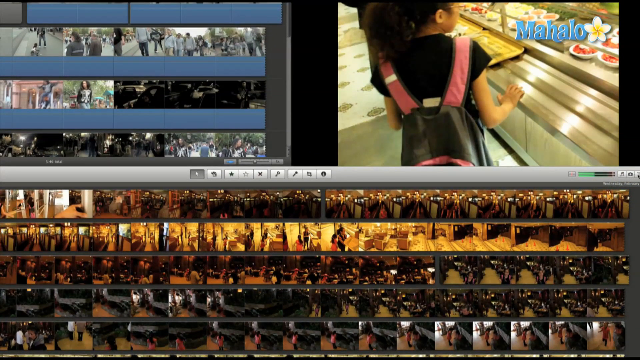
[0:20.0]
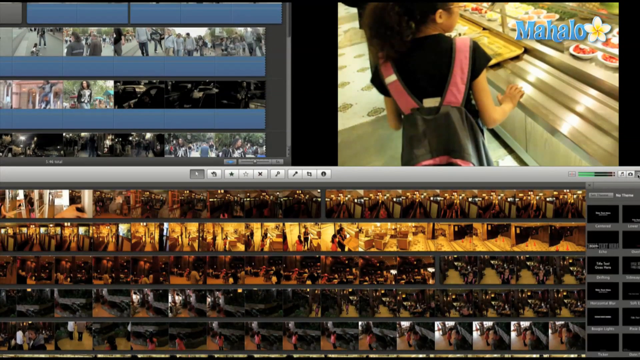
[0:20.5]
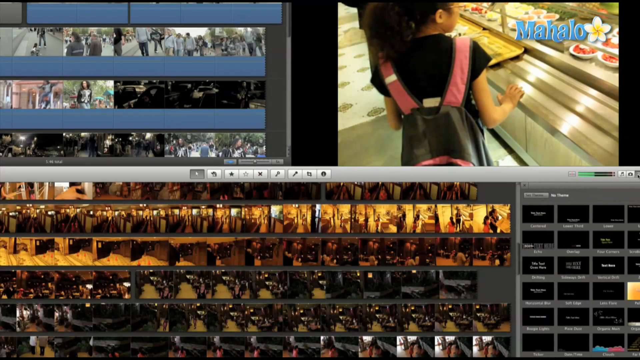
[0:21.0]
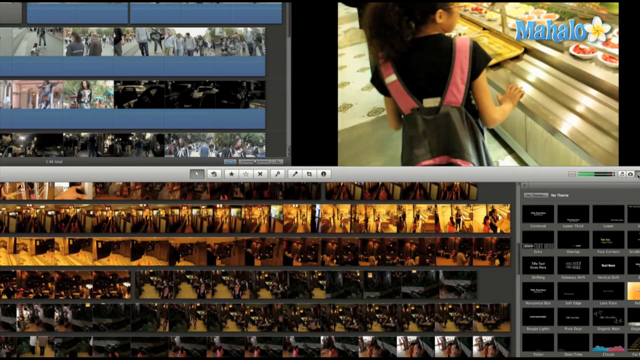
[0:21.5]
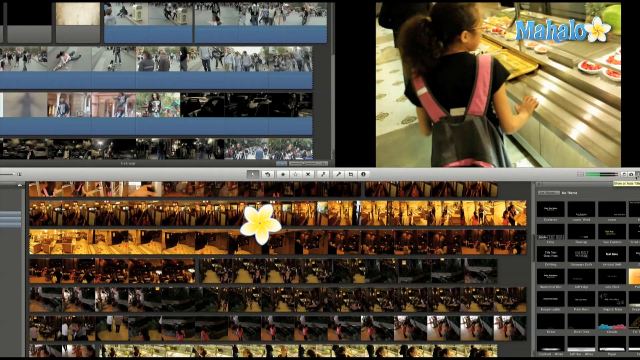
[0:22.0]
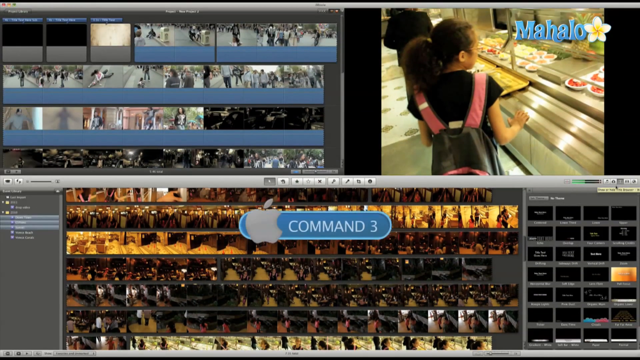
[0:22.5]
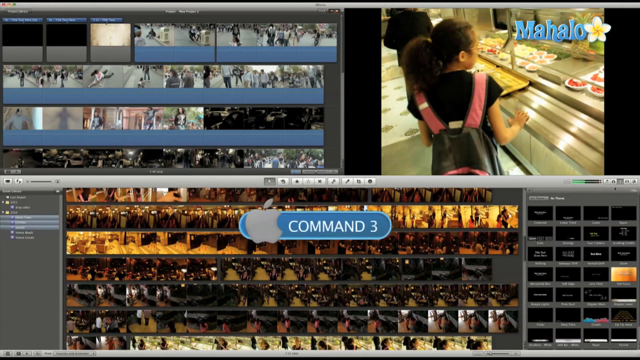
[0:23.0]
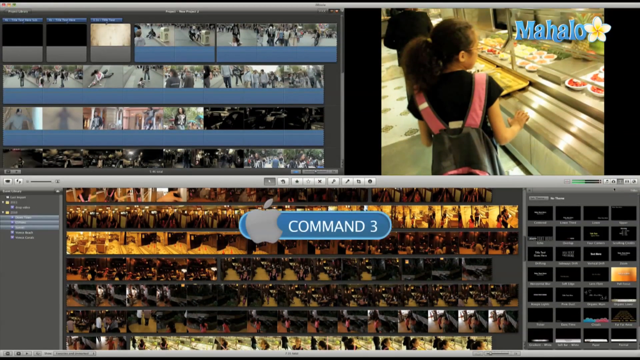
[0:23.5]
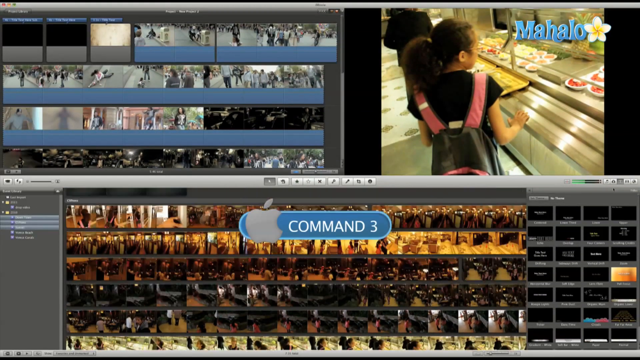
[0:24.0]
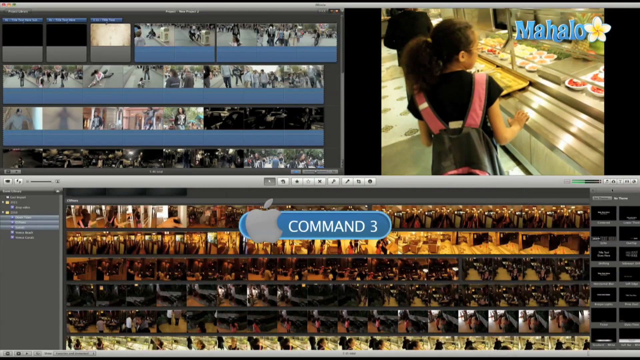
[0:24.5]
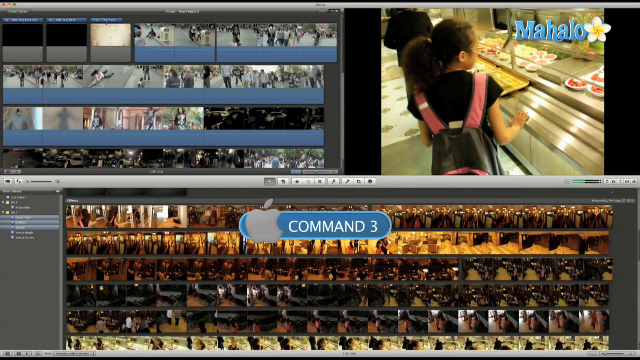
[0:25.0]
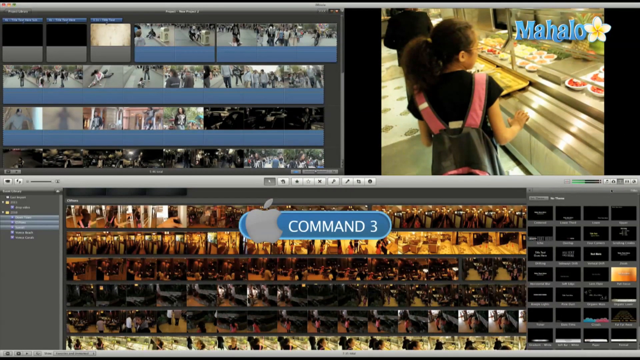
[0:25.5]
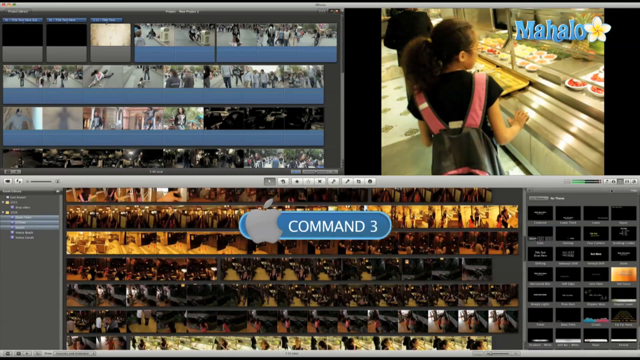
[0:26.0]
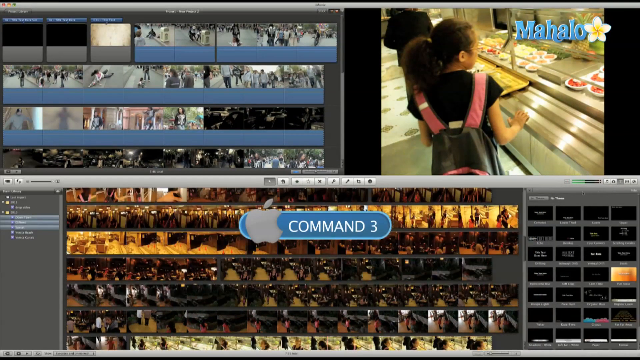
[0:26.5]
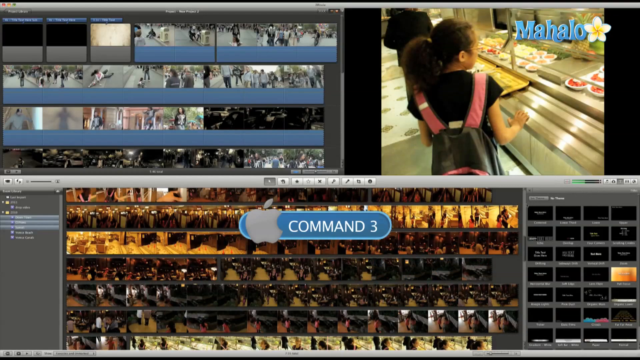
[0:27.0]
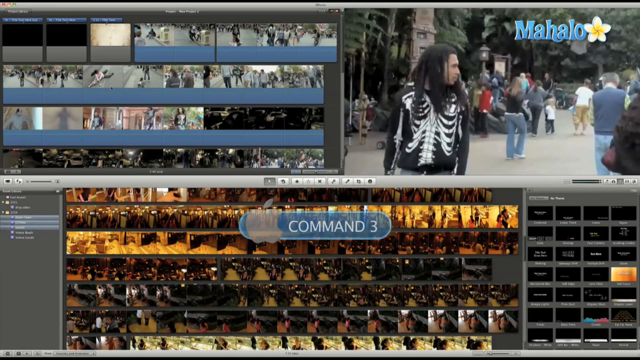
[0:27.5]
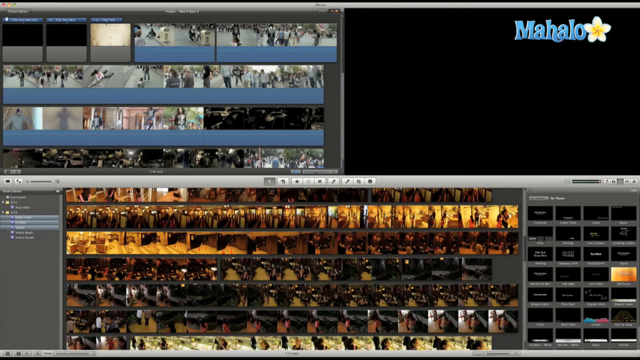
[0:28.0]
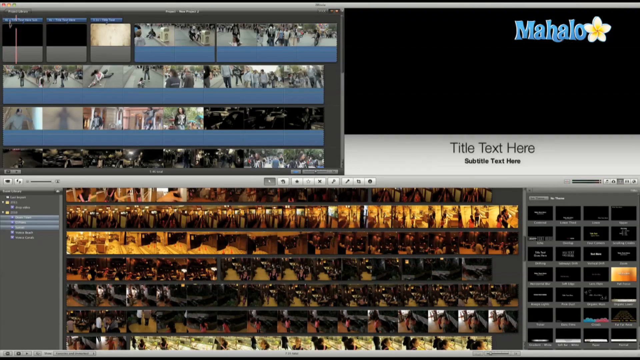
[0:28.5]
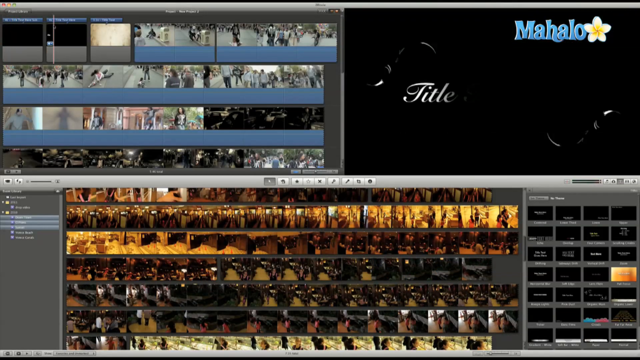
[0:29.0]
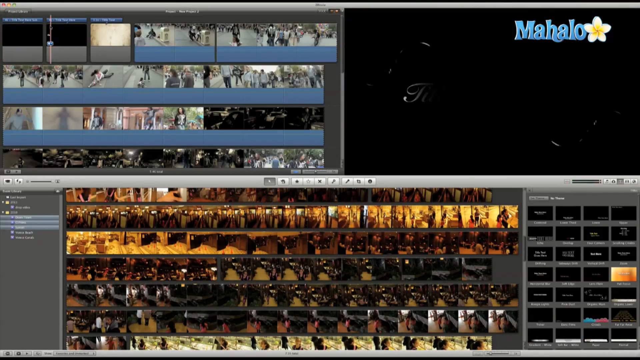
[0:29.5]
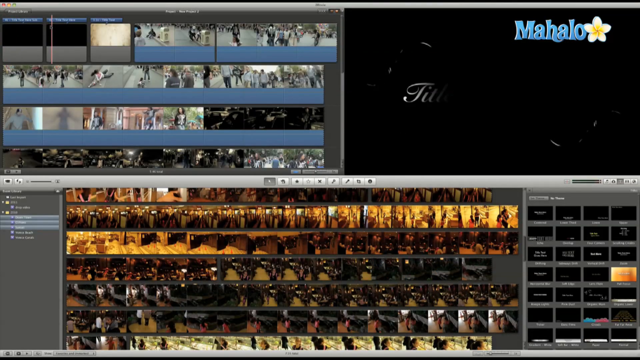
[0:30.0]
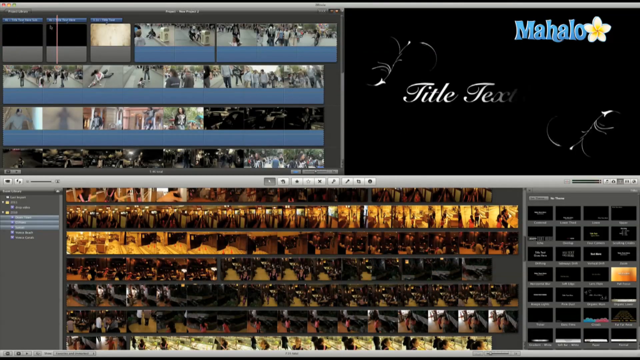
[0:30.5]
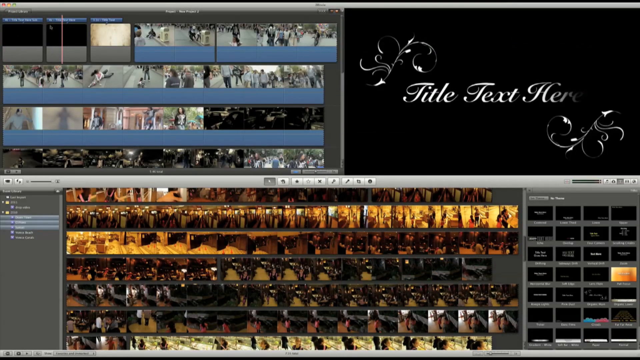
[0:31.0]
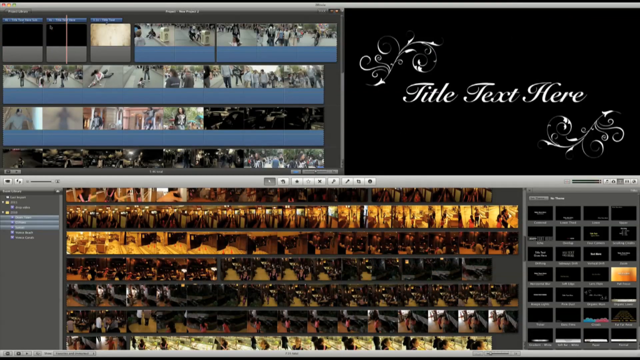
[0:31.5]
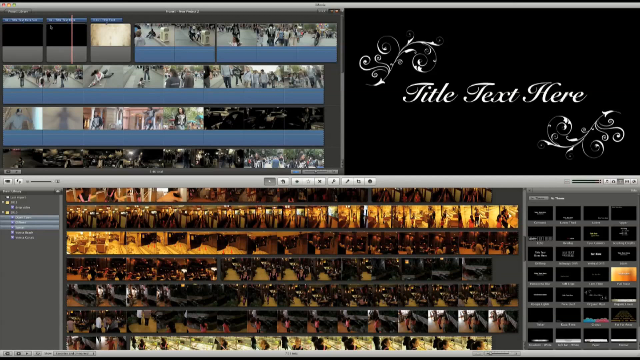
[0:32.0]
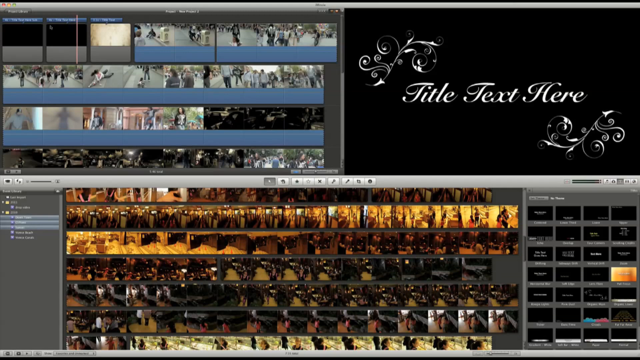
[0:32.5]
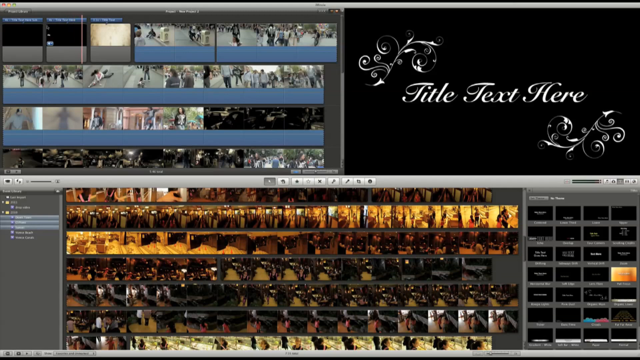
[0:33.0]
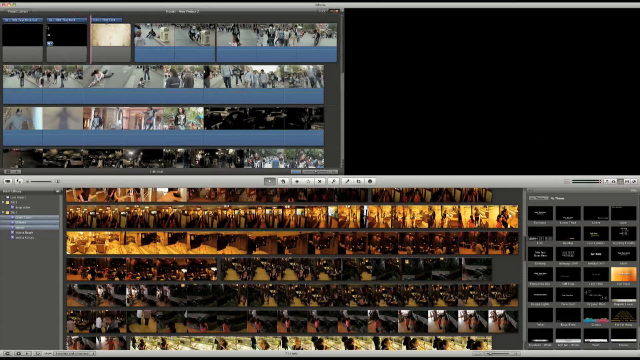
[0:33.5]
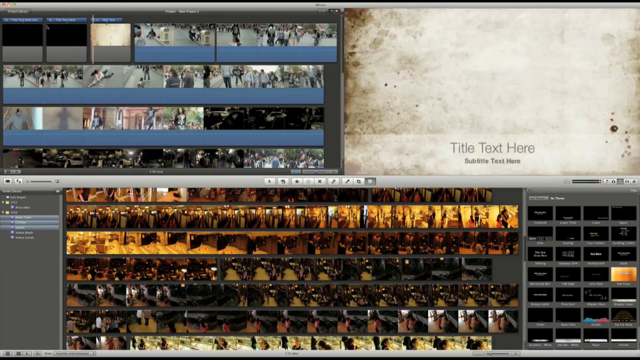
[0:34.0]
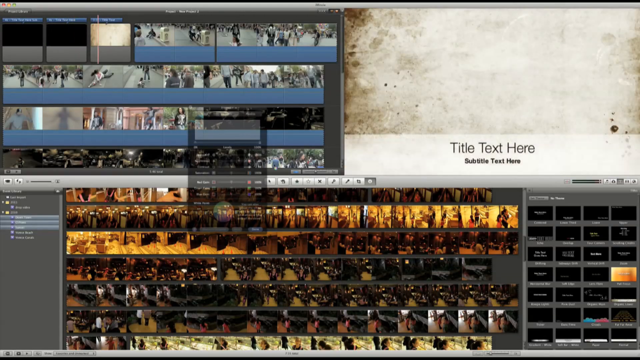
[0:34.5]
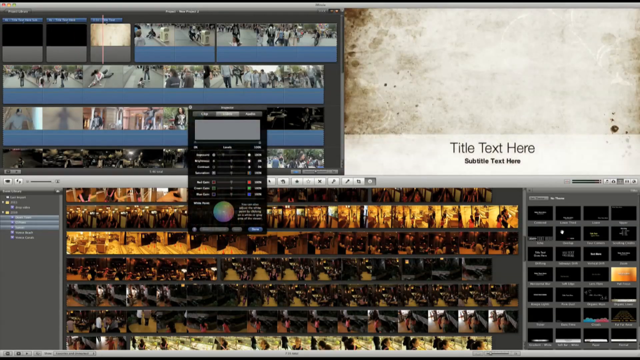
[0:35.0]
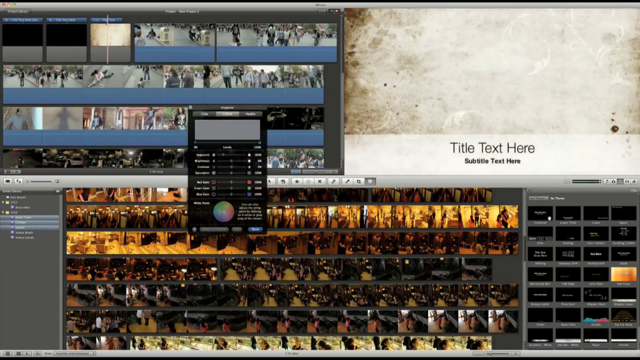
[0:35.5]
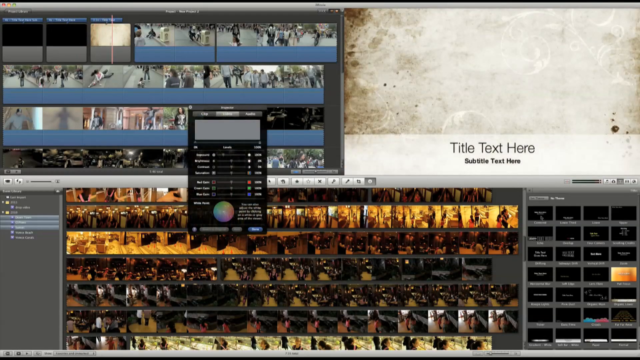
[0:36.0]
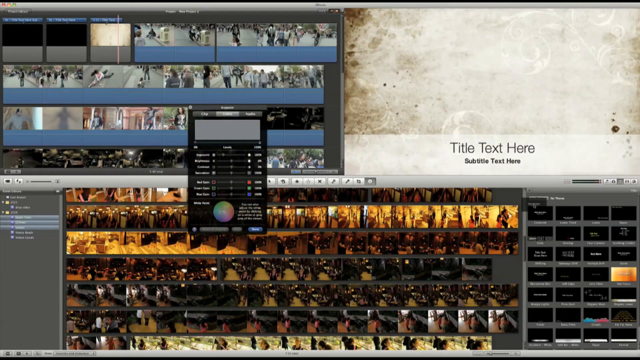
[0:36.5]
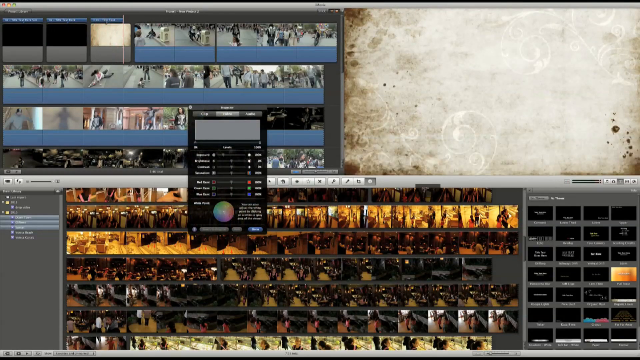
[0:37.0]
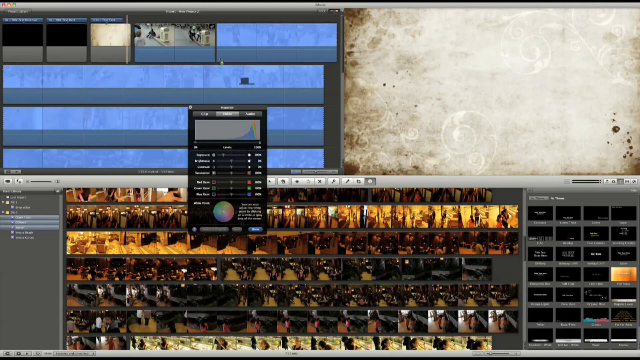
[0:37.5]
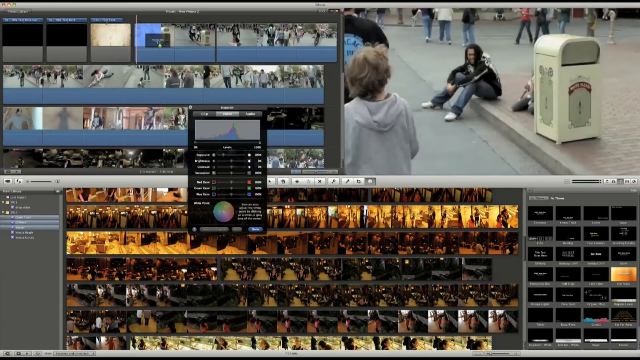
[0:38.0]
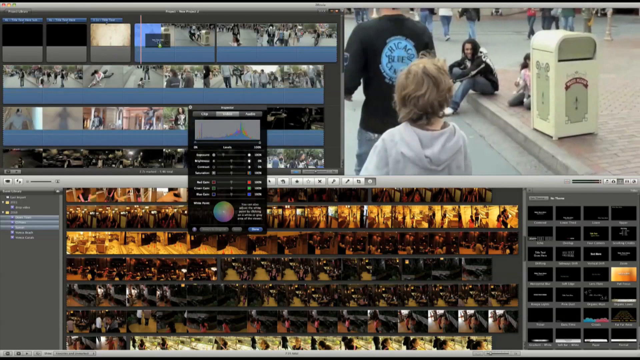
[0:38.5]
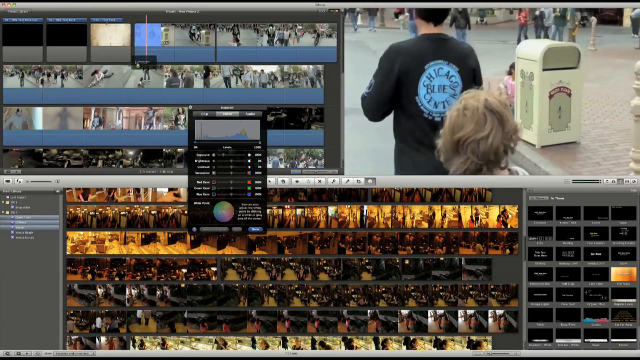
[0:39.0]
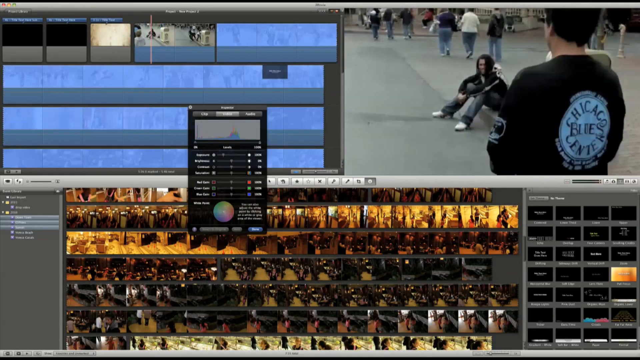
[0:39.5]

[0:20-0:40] In the editor, the video being edited is divided into sections, and the scene currently being dragged or highlighted is previewed. Scenes can be moved from one position to another. One scene, shown in the top right corner, features a little girl ordering food in a food court; she wears a black T-shirt and carries a black backpack with pink stripes. In the top left are different scenes of people walking on a street, with some vehicles parked. Ken presses different buttons to view different sections of the video, and as he hovers the mouse over a scene, that scene plays in the mini-player at the top right. The bottom section holds many cutscenes from the video being reviewed.